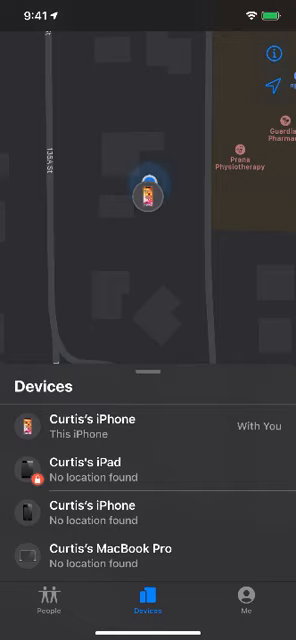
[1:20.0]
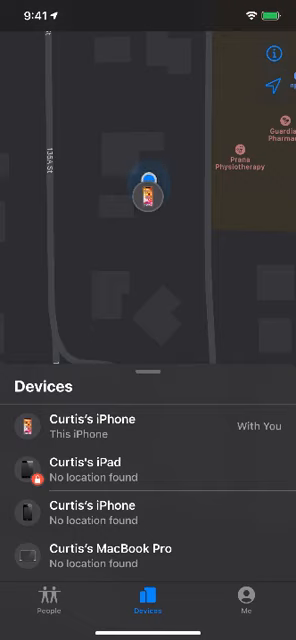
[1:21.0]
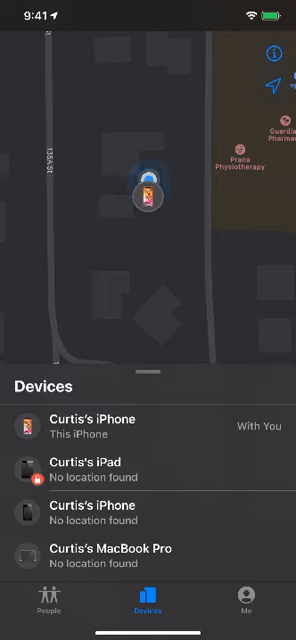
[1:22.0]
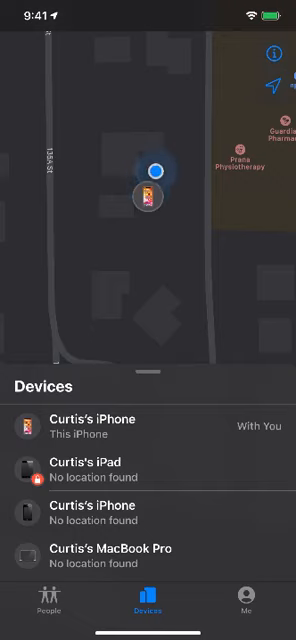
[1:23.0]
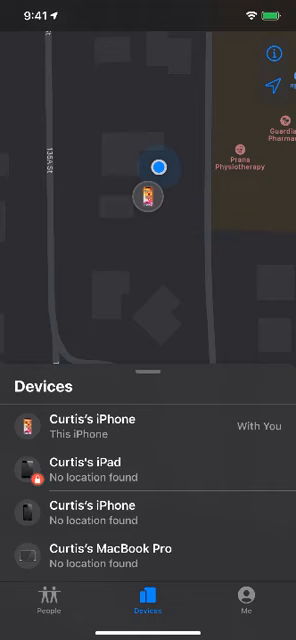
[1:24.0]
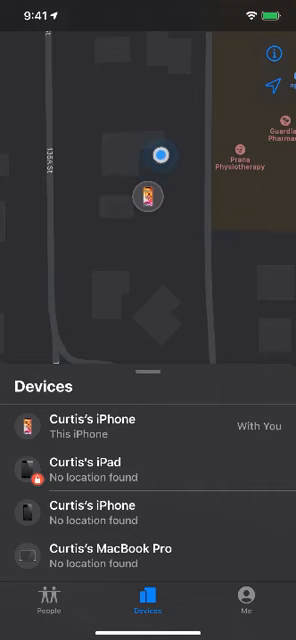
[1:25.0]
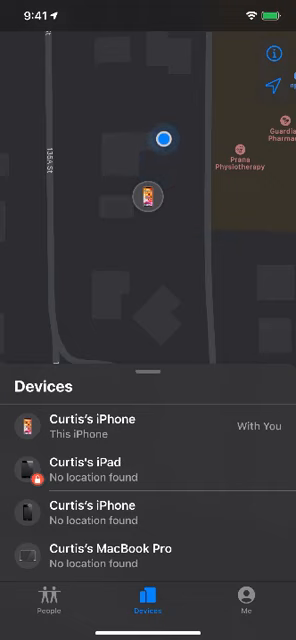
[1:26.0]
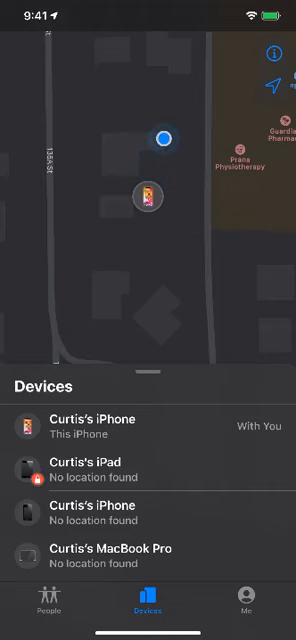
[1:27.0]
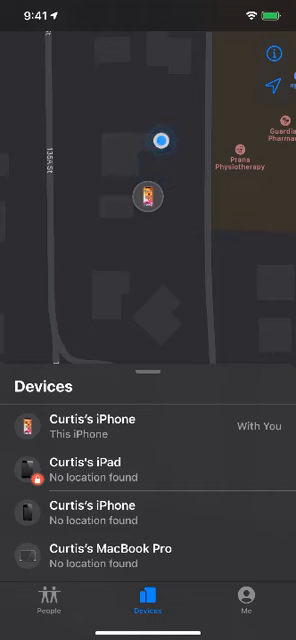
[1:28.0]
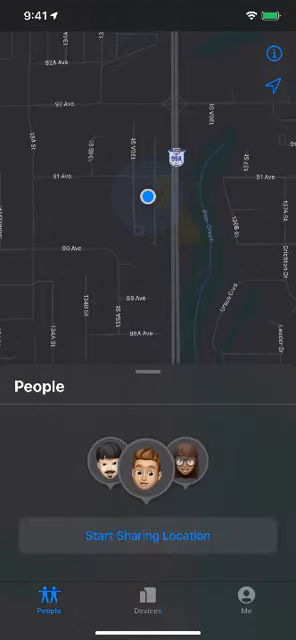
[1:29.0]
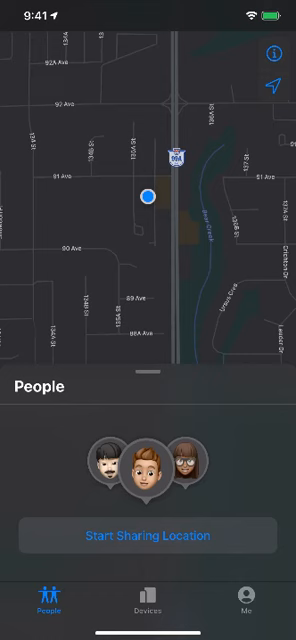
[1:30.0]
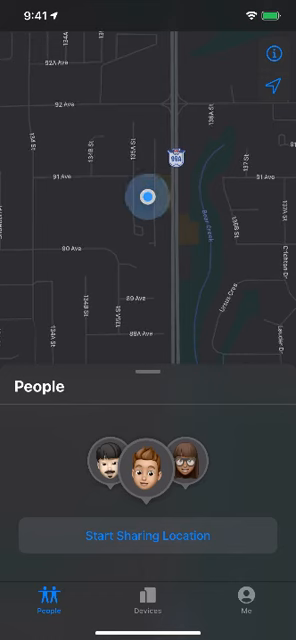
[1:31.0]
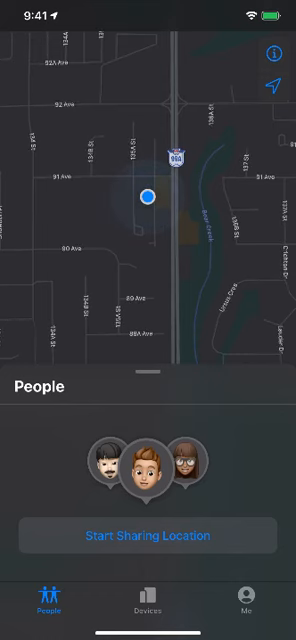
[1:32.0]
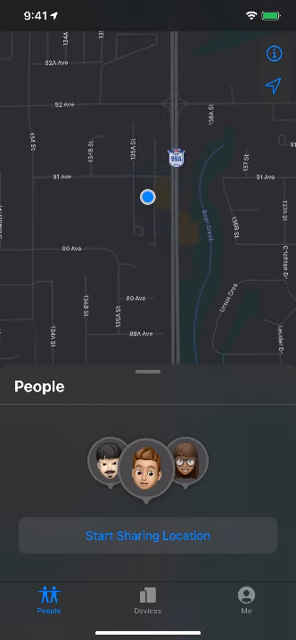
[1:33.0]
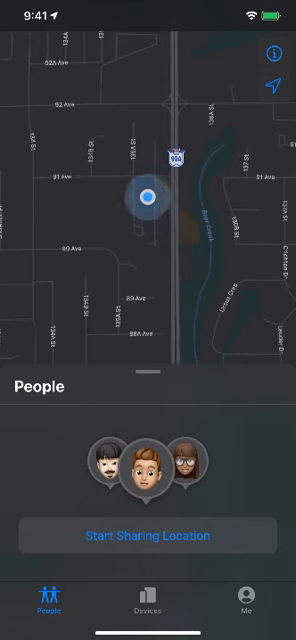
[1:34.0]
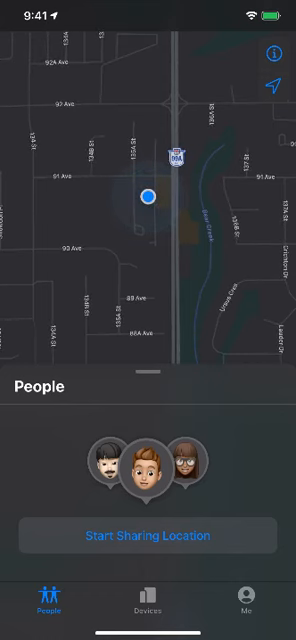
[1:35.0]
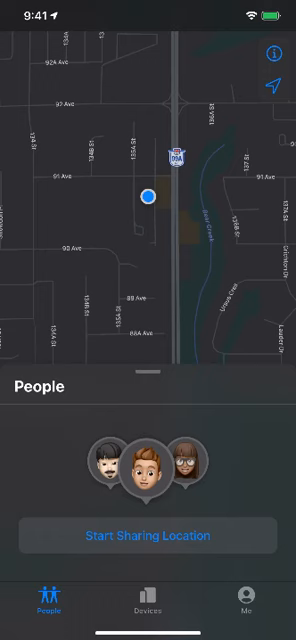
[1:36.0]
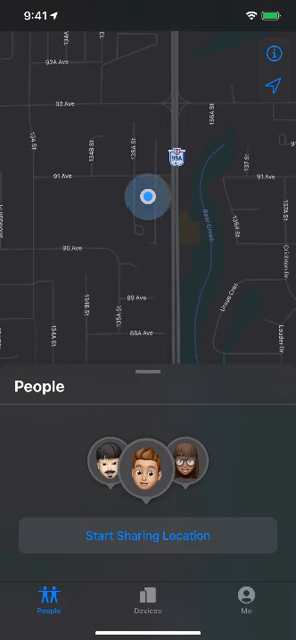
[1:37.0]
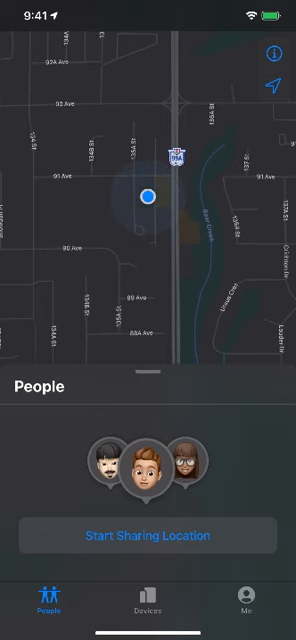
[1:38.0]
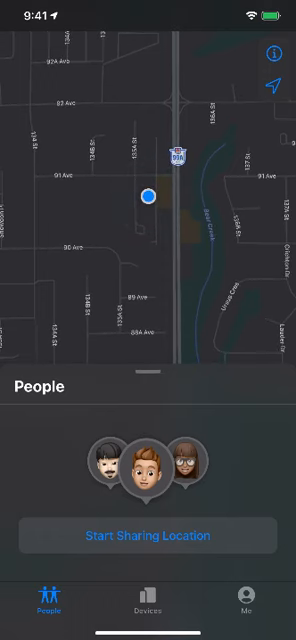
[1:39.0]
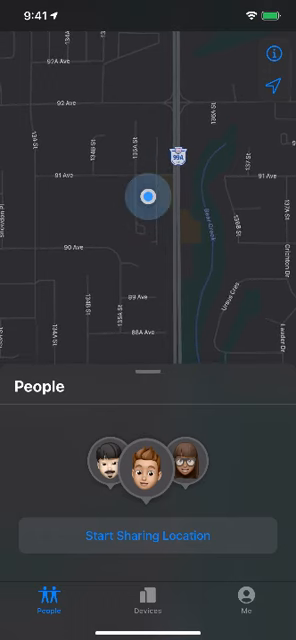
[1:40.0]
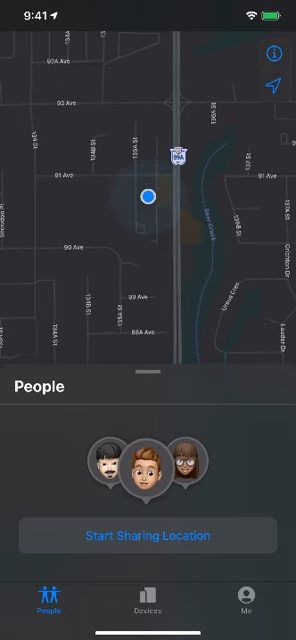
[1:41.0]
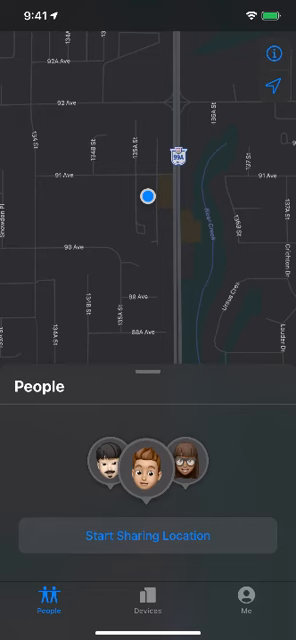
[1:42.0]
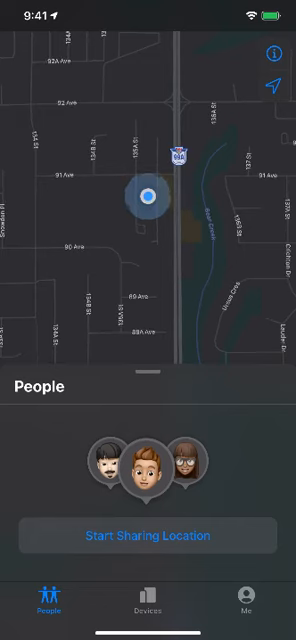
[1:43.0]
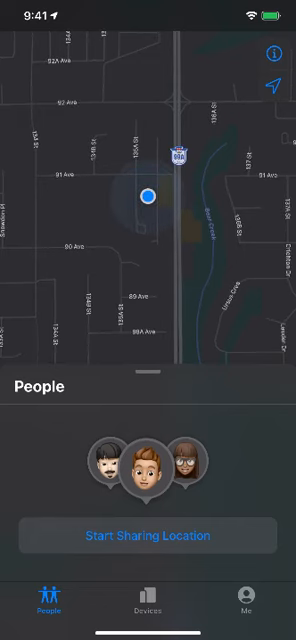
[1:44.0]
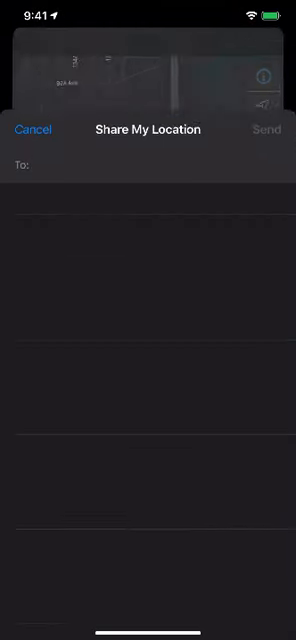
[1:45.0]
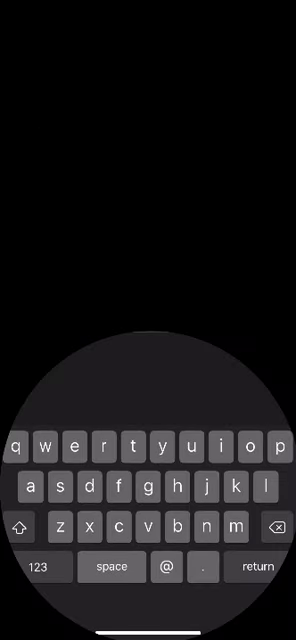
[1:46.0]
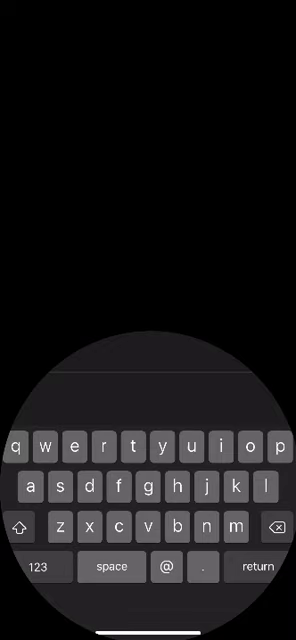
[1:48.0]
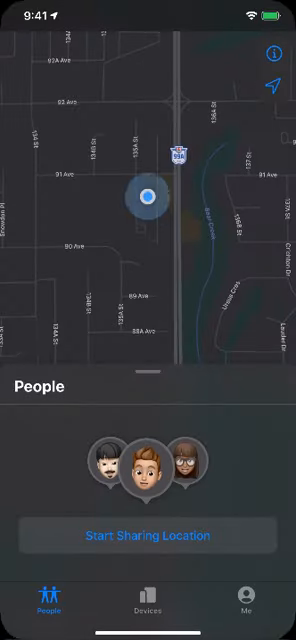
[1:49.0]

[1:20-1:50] The Find My app is open on the iPhone. The top left corner shows the time as 9:41, and the top right shows a battery icon as a full green bar. Much of the screen shows a map with a blue dot and an iPhone icon. At the bottom, a menu reads "devices" and lists Curtis' iPhone, Curtis' iPad, Curtis' iPhone and Curtis' MacBook Pro. The blue dot, representing whoever is holding the phone, is probably moving around a house as the GPS tries to calibrate. The map zooms out, showing a greater area with the blue dot in the center. The device list disappears, and the bottom now reads "people" with a large button that says "start sharing location". Occasionally a blue circle pings off the blue dot.